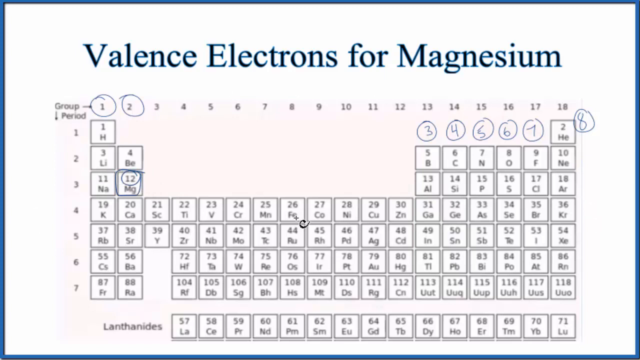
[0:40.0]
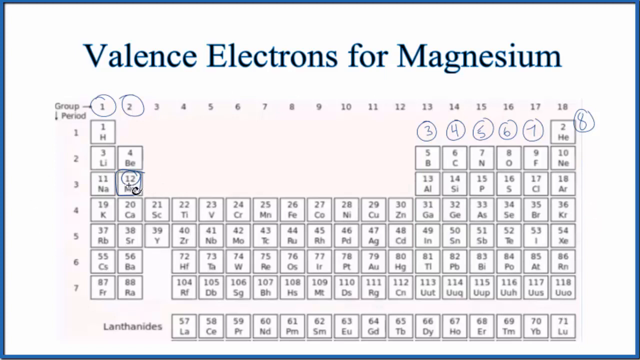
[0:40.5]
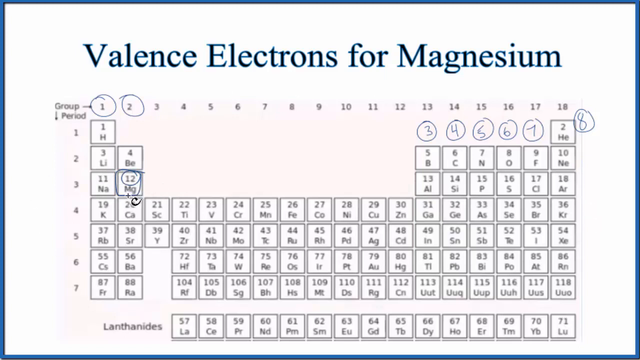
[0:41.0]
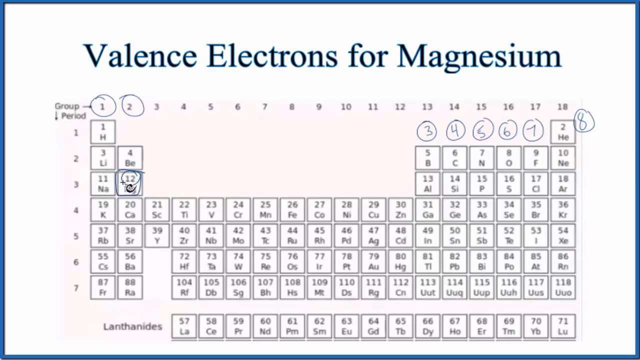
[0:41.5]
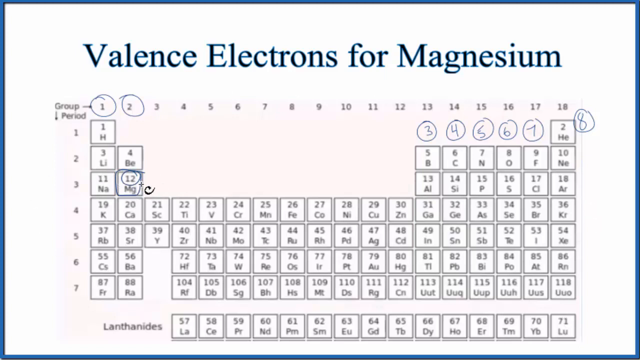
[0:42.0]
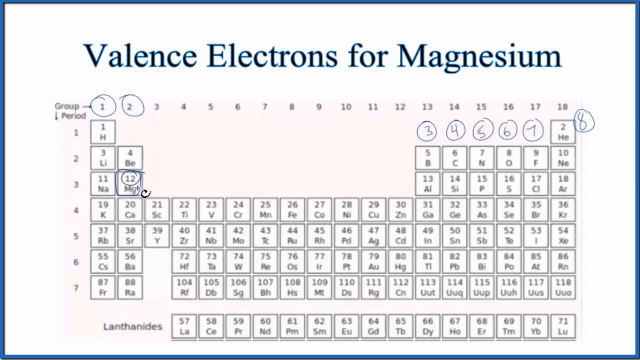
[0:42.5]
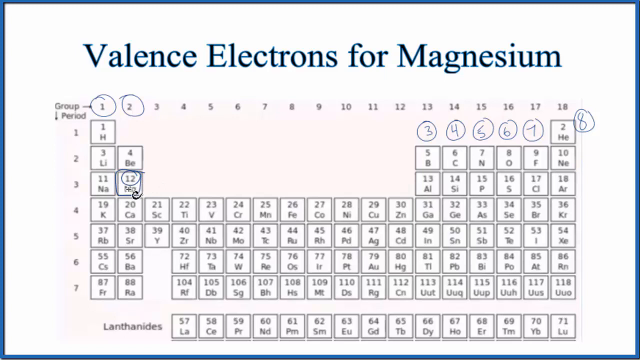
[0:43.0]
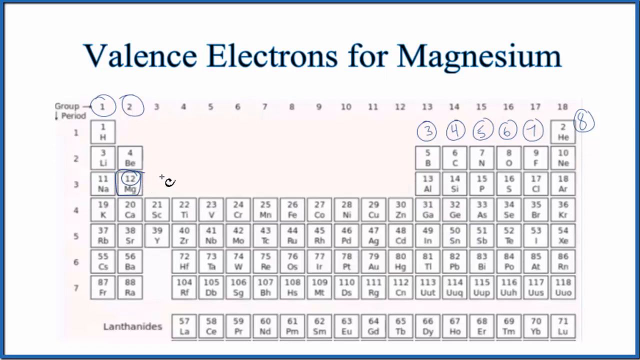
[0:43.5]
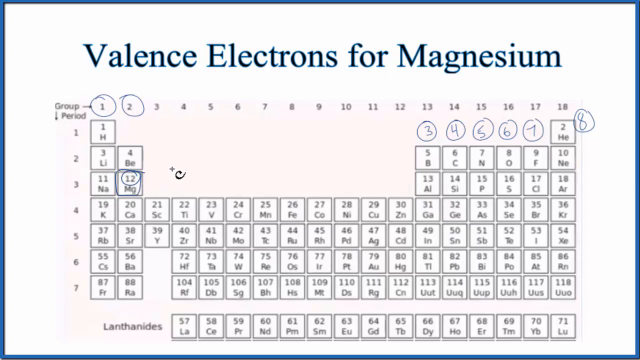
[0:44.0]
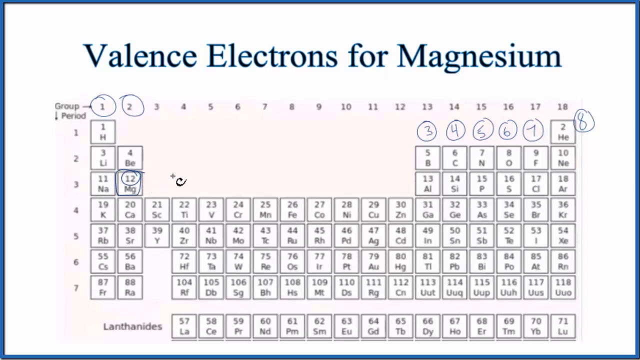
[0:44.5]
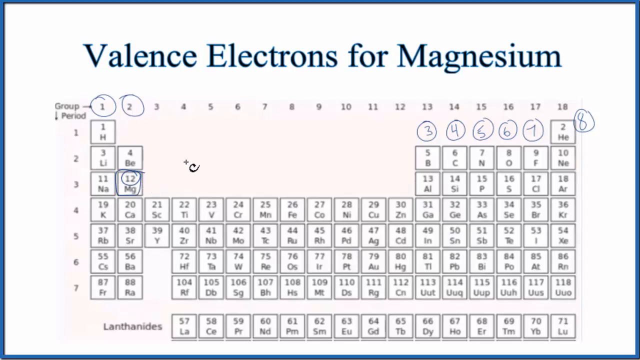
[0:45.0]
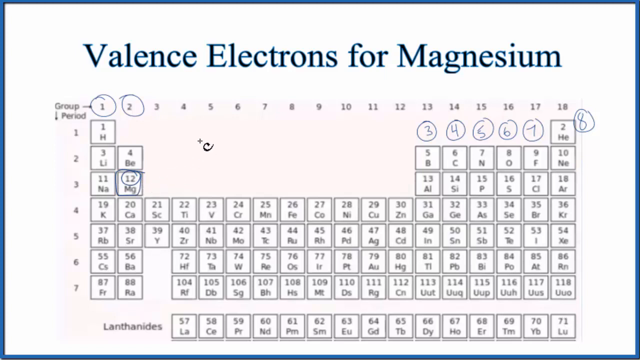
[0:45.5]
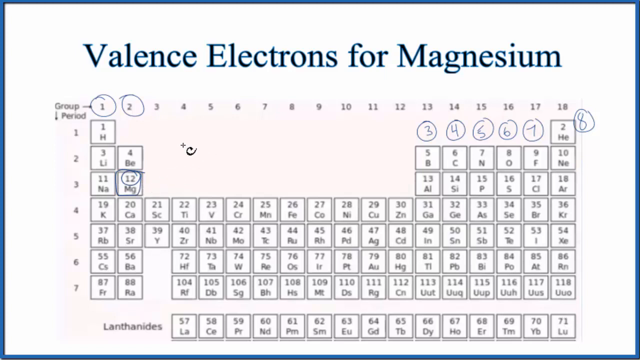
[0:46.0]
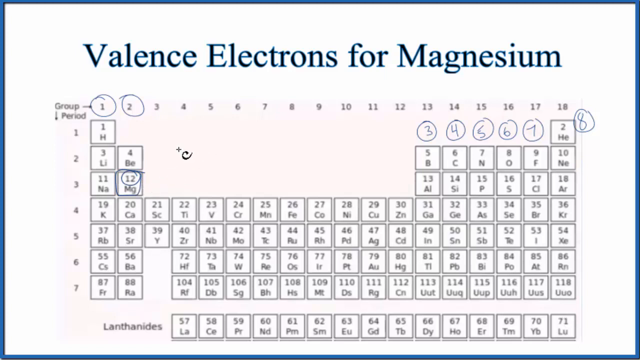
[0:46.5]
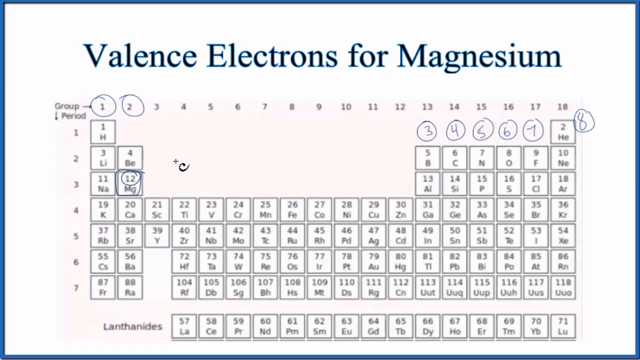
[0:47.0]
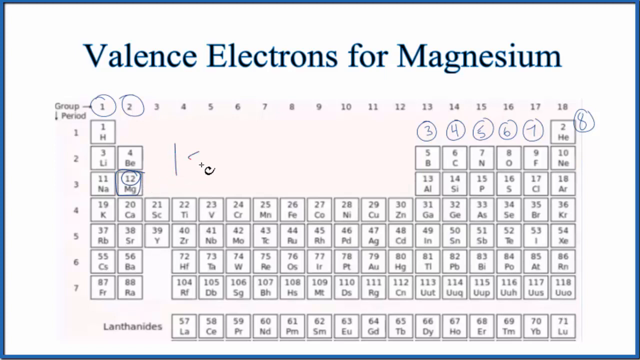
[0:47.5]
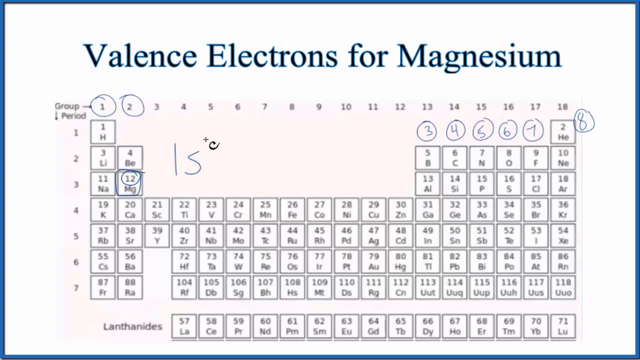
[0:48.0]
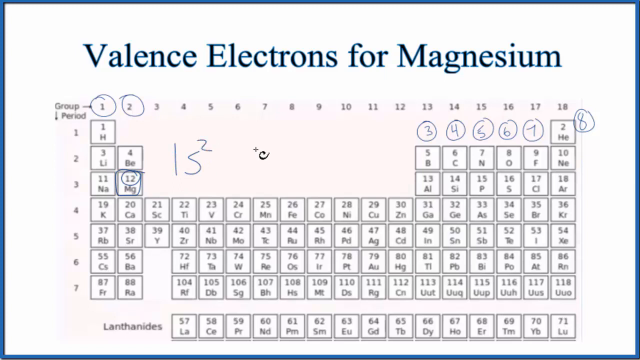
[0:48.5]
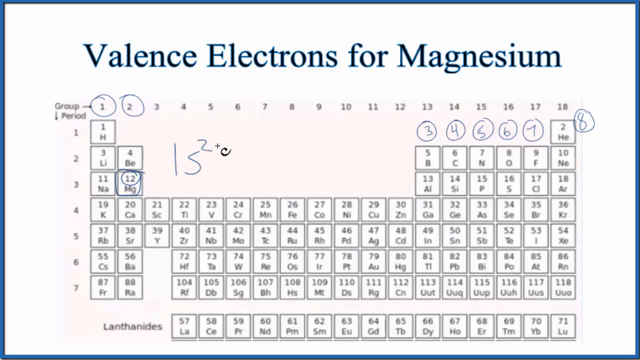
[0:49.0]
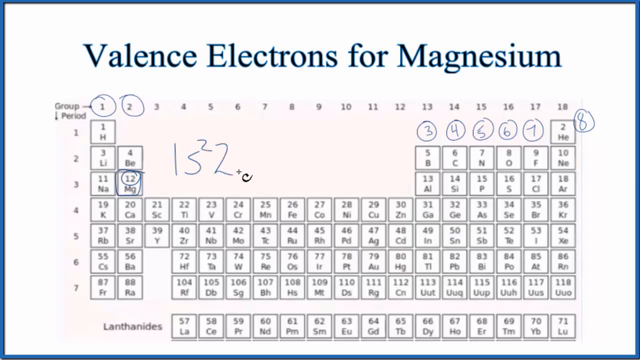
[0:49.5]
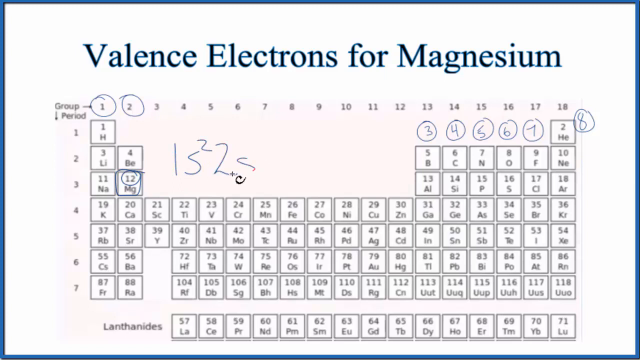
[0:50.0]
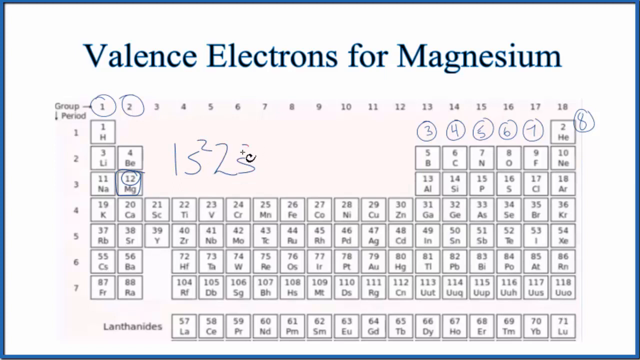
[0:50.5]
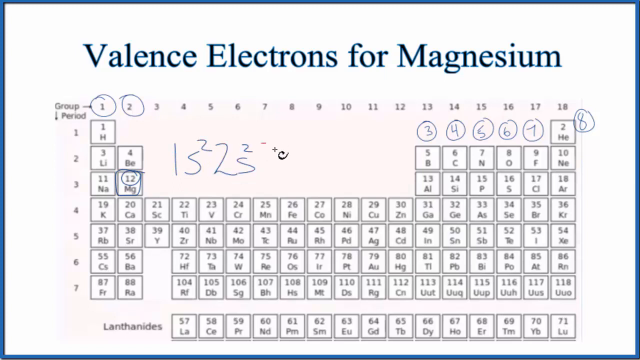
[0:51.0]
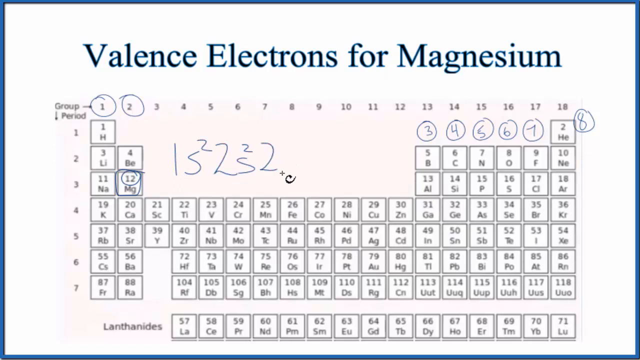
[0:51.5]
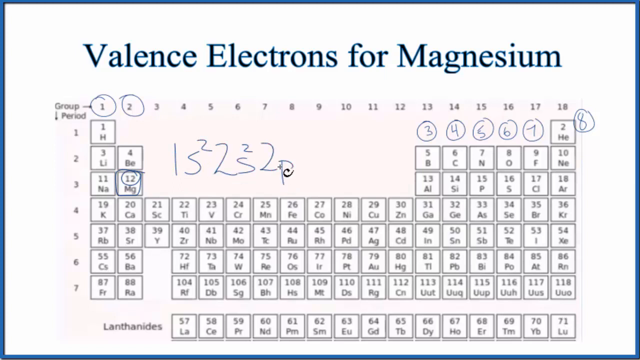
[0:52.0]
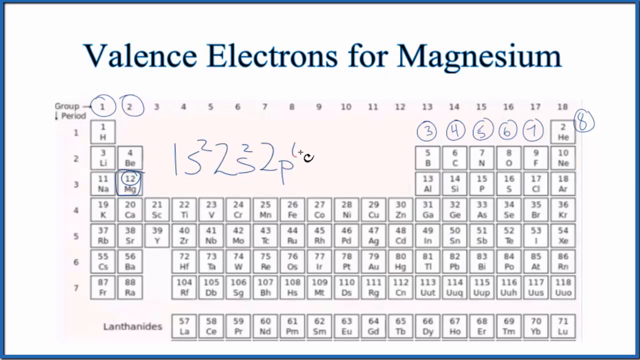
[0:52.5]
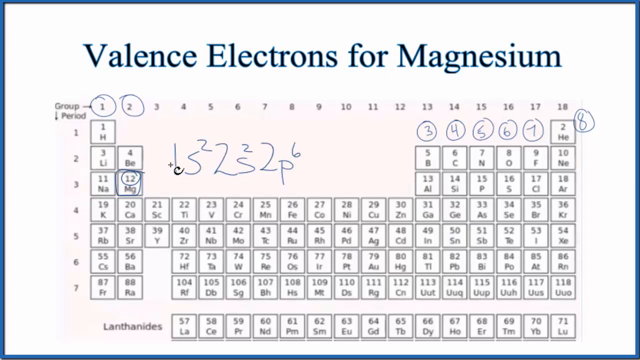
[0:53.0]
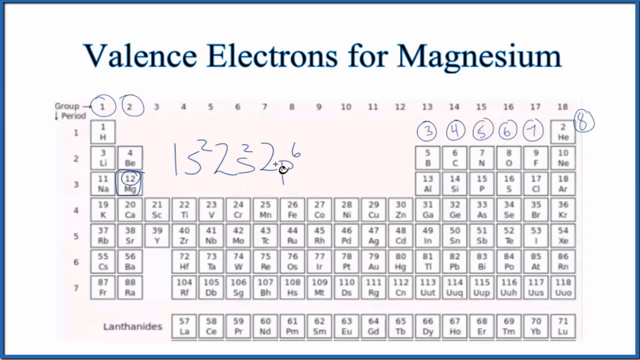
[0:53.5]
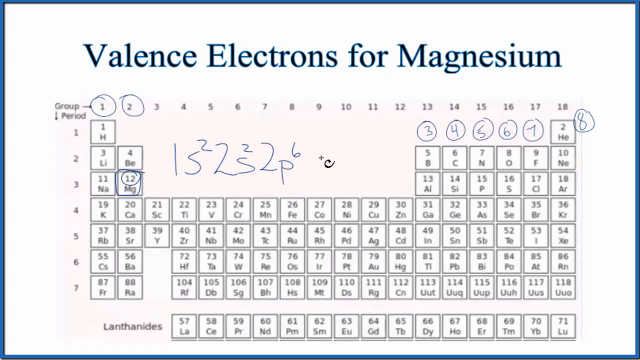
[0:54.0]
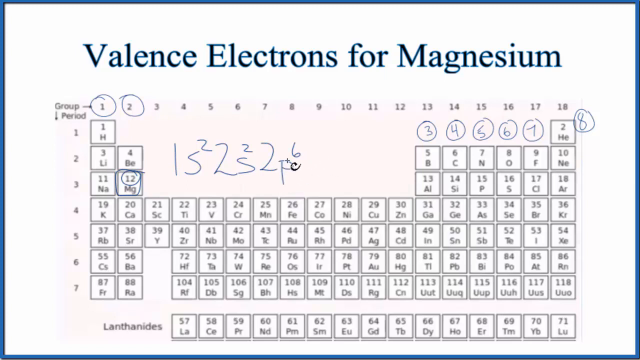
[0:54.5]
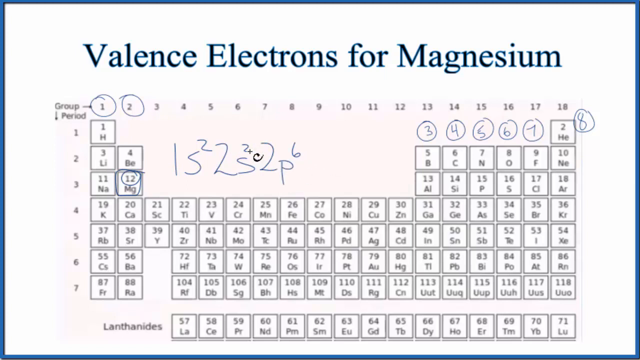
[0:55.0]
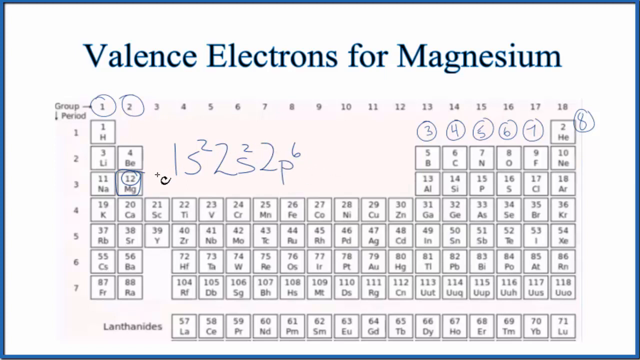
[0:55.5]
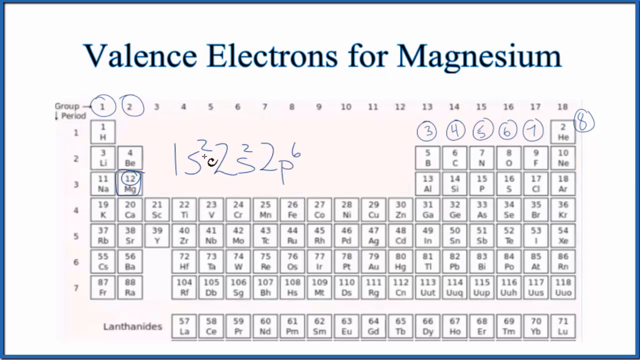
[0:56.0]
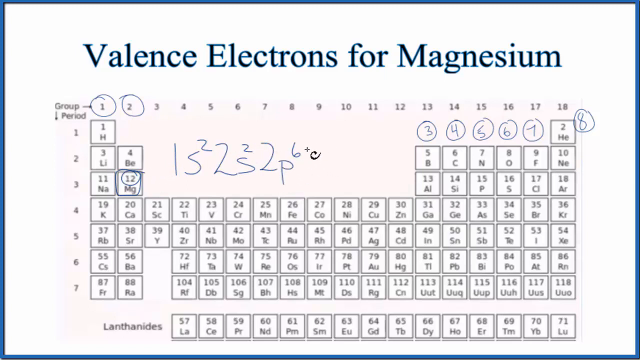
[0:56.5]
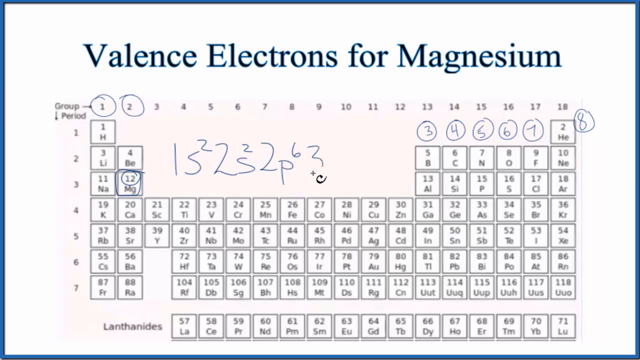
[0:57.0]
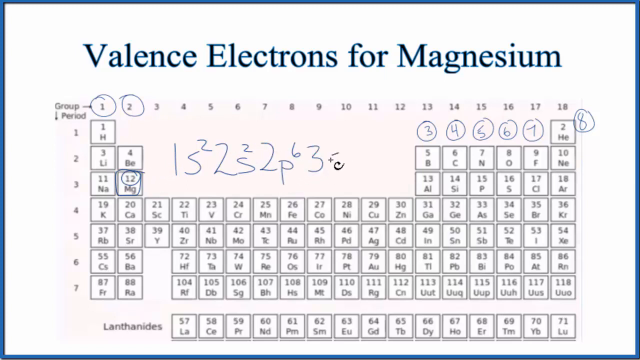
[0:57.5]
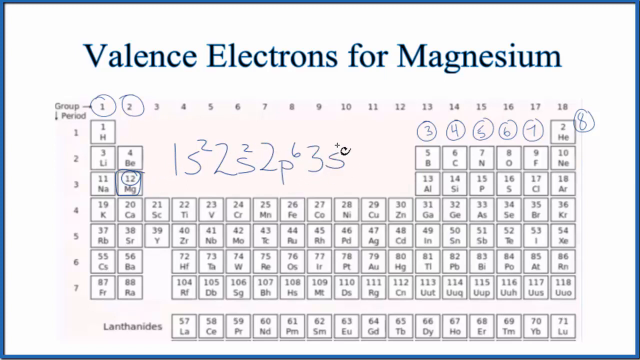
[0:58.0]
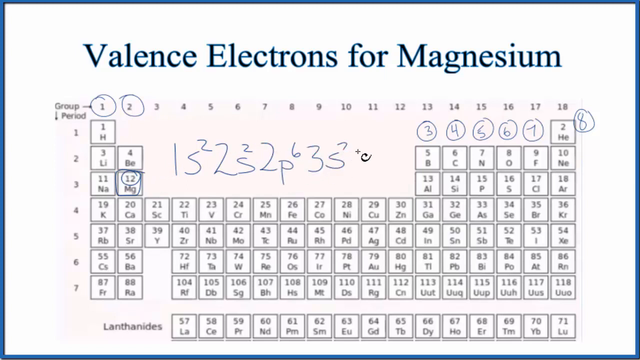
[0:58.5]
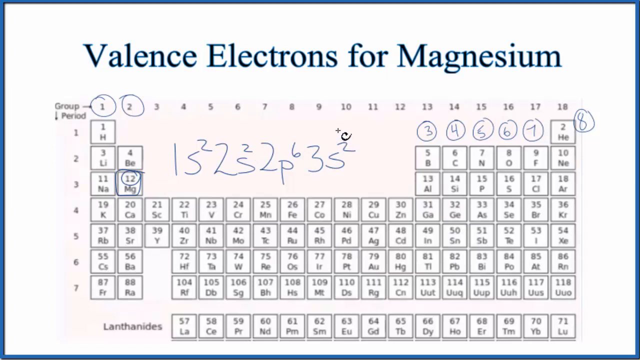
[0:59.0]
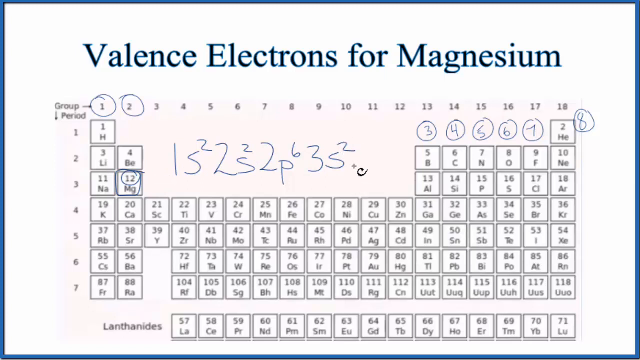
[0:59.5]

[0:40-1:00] A periodic table is on a white background, with text at the top reading "valence electrons for magnesium." The column numbers 1 and 2 are circled, and under columns 13 through 18 are blue handwritten numbers 3, 4, 5, 6, 7 and 8, with 8 under 18. Magnesium, the twelfth element, in the second column three rows down, appears to have its whole square circled, and its number 12 is circled. A cursor that looks like a mouse cursor but is a plus sign with a C at its bottom right moves around. It goes to the Mg and makes counterclockwise circles around it, then moves slowly upward and to the right. In the large gap between elements 4, 5, 12 and 13, it writes 1s with a superscript 2, then 2s with a superscript 2, then 2p with a superscript 6. It goes back to the 2p and 2s2, then to magnesium again, and after 2p superscript 6 it writes 3s with a superscript 2.